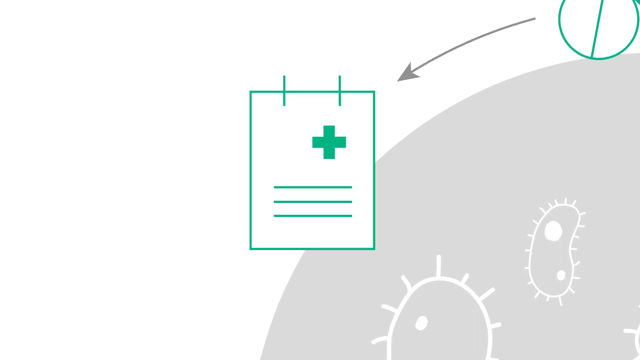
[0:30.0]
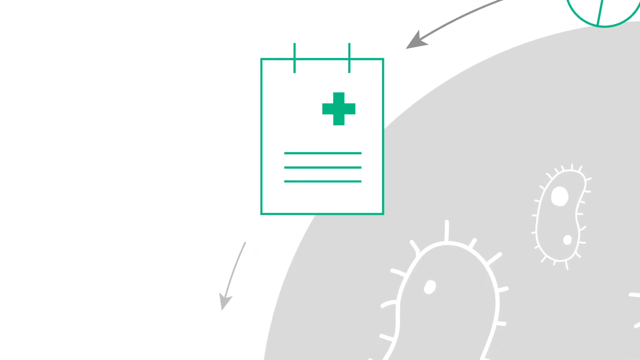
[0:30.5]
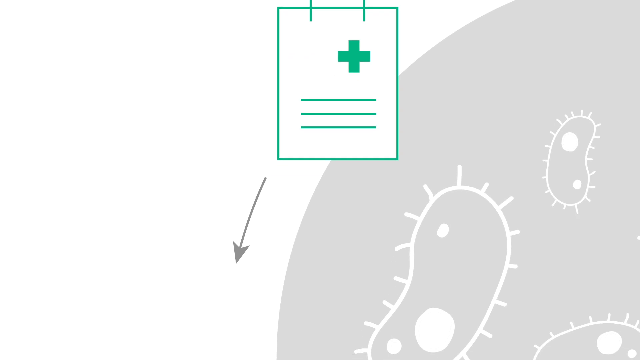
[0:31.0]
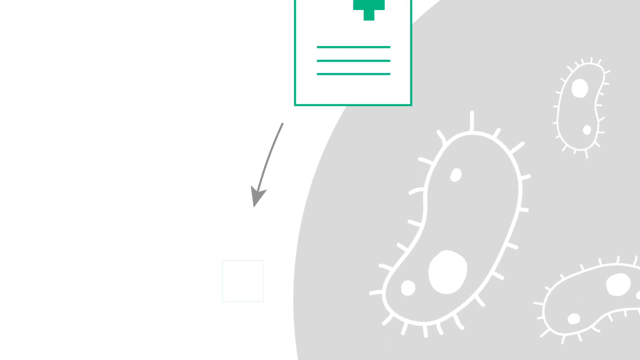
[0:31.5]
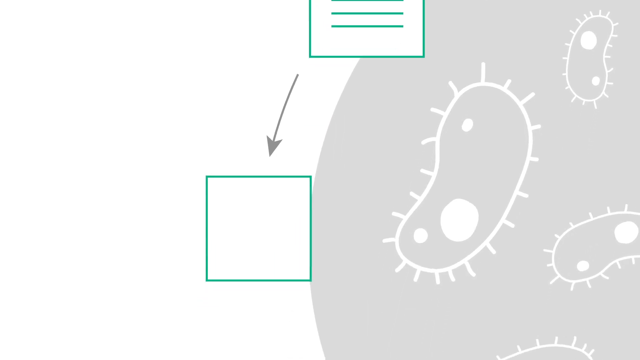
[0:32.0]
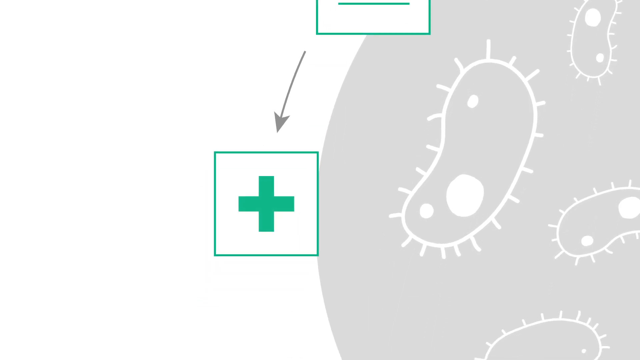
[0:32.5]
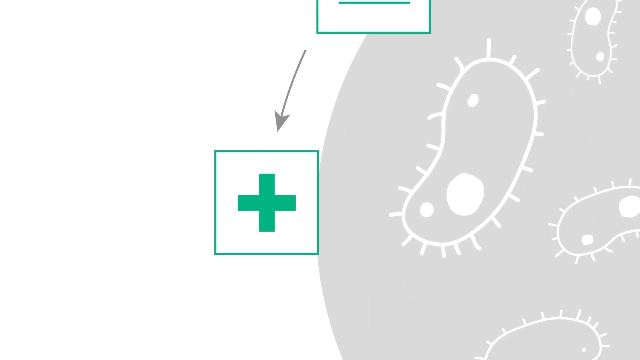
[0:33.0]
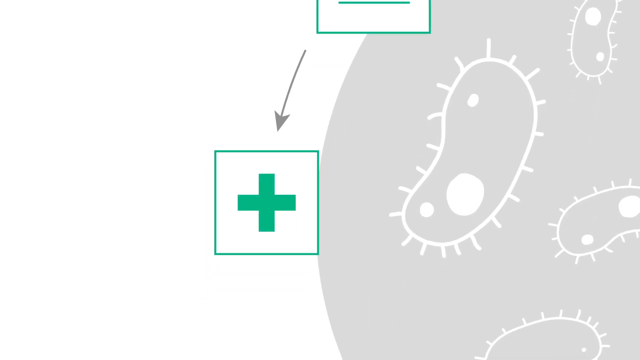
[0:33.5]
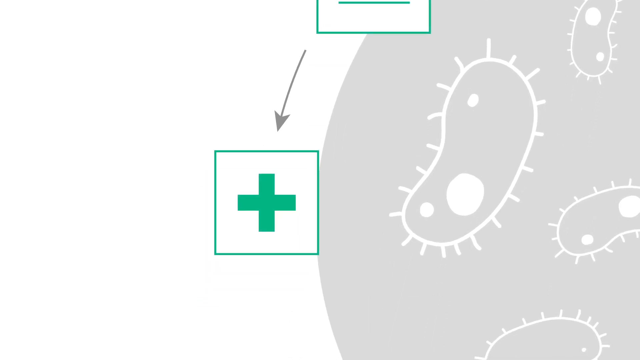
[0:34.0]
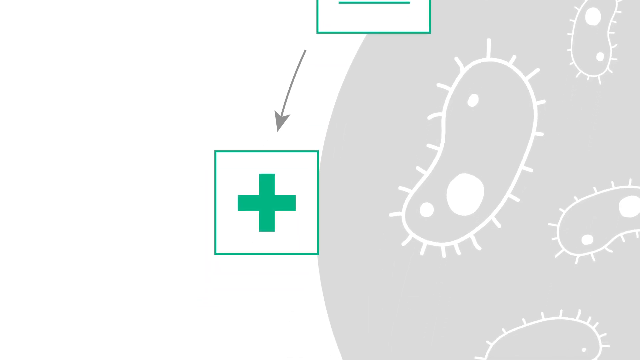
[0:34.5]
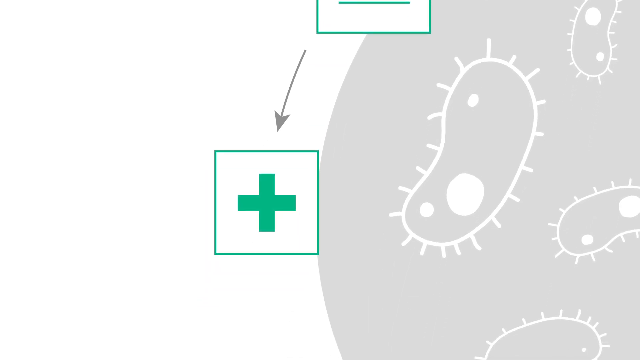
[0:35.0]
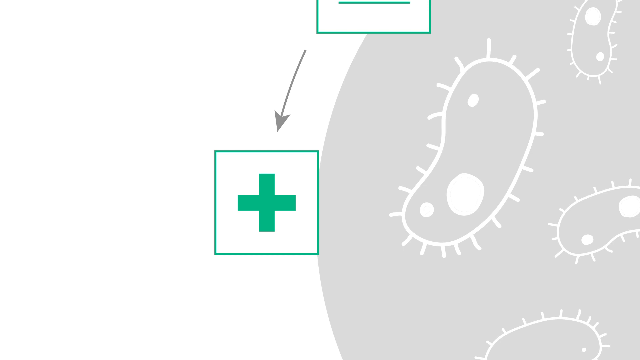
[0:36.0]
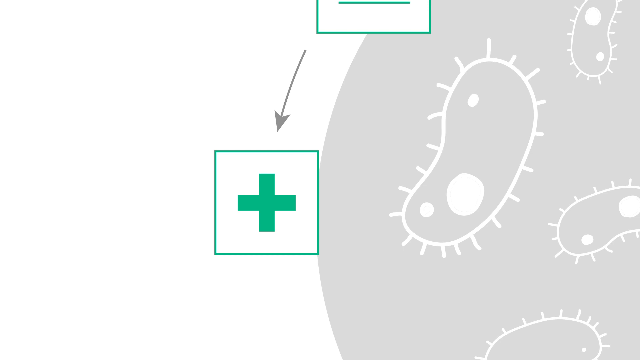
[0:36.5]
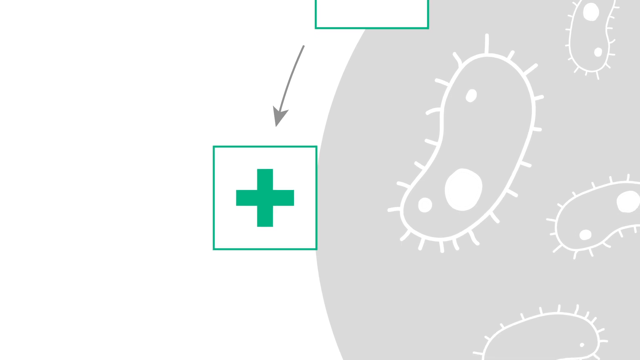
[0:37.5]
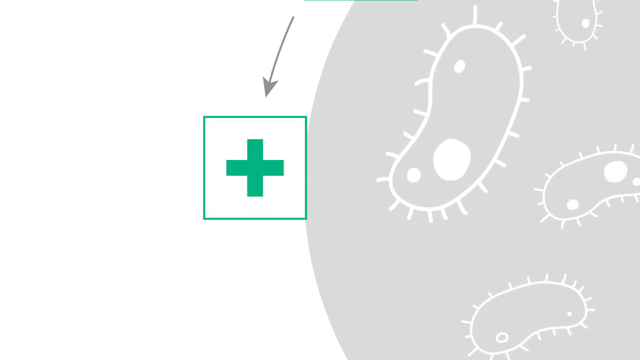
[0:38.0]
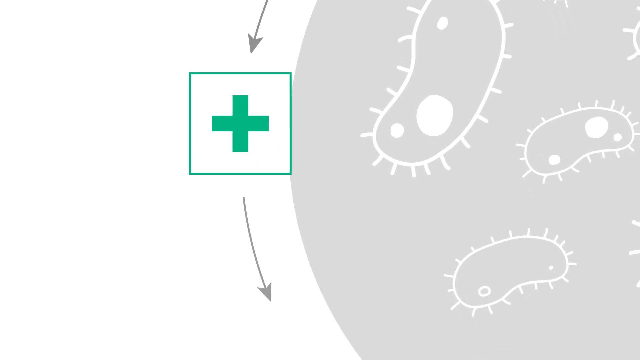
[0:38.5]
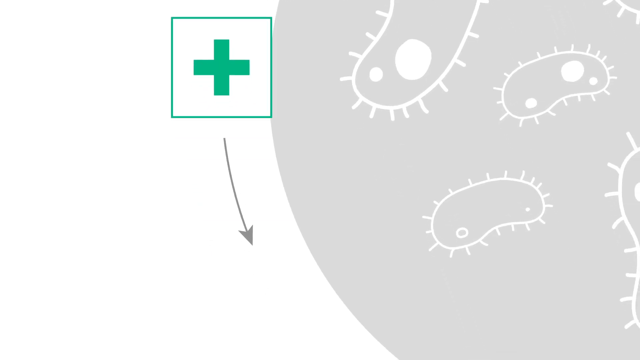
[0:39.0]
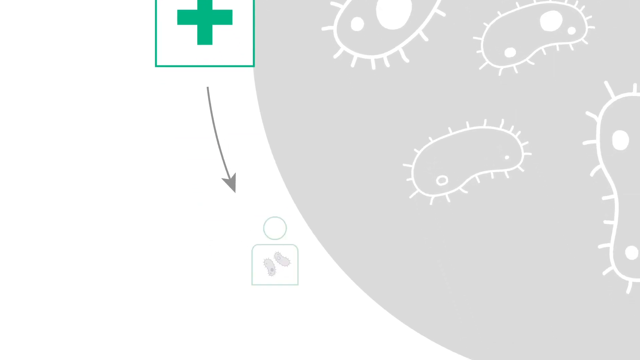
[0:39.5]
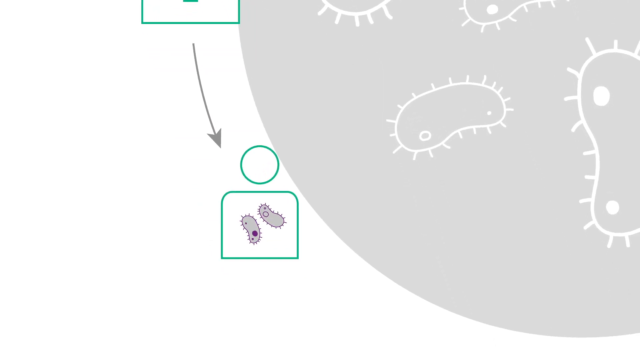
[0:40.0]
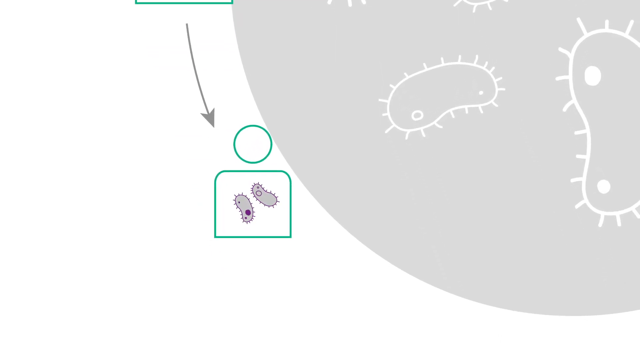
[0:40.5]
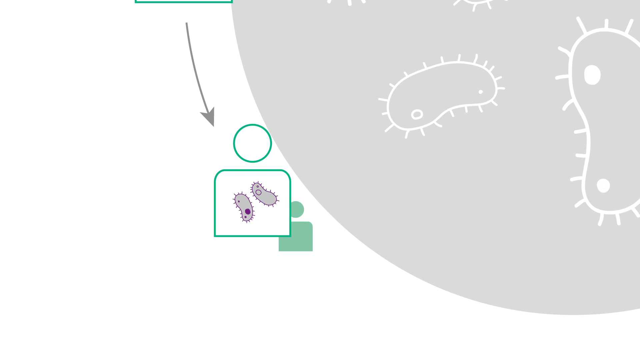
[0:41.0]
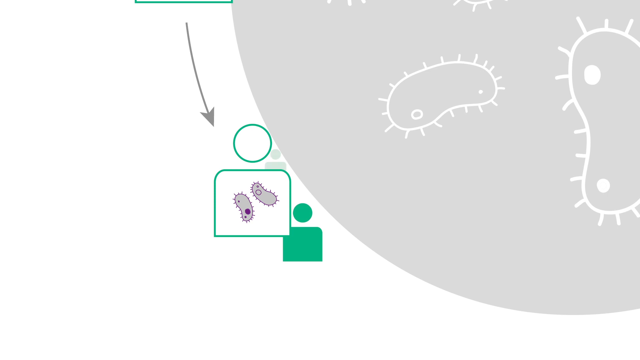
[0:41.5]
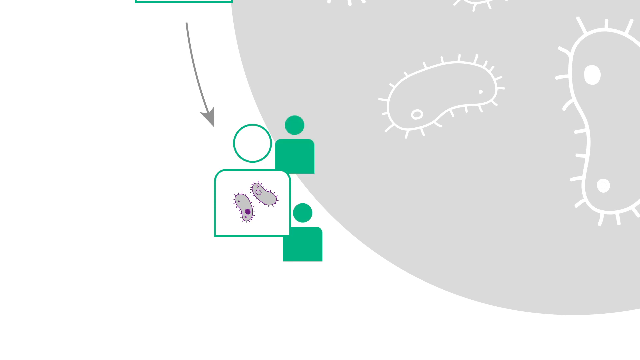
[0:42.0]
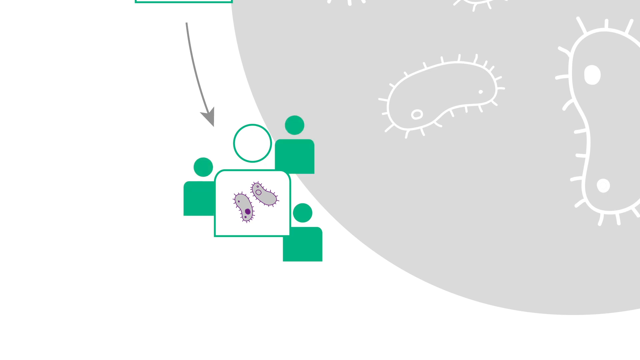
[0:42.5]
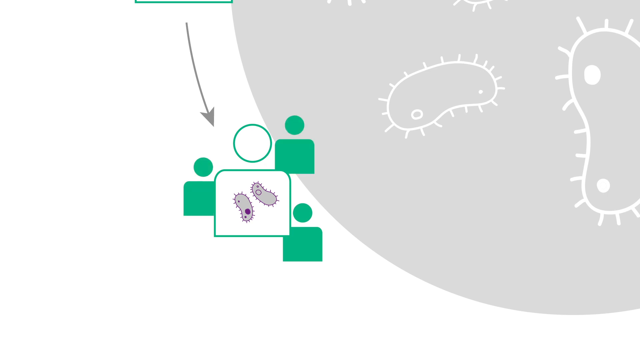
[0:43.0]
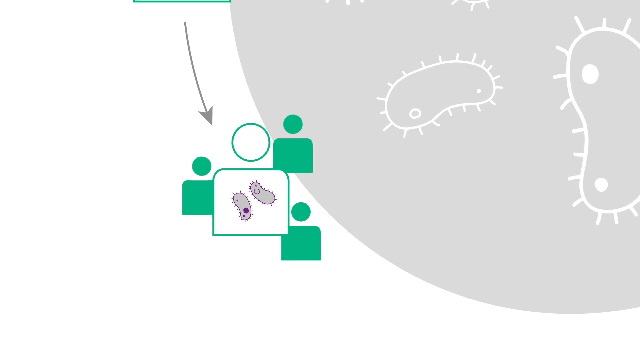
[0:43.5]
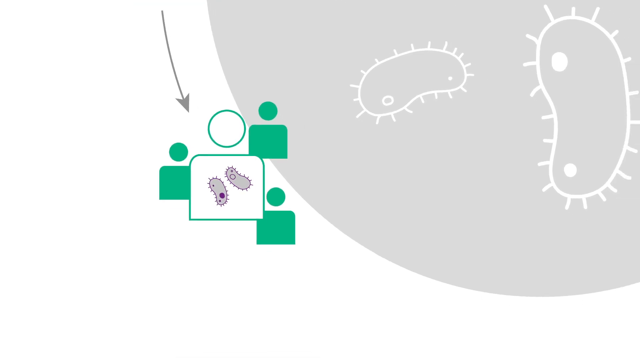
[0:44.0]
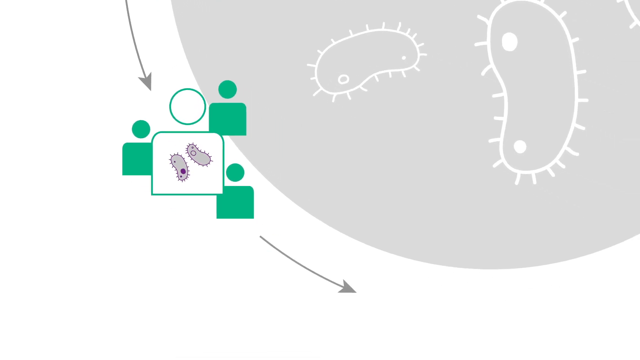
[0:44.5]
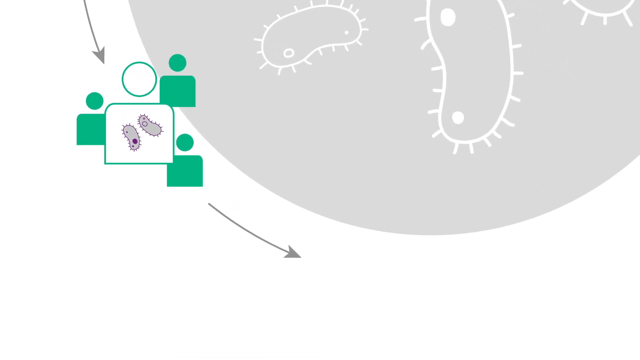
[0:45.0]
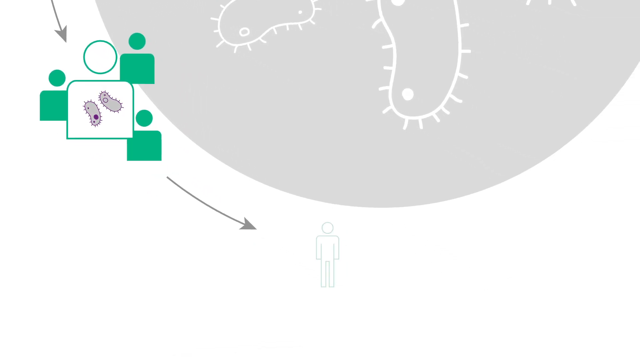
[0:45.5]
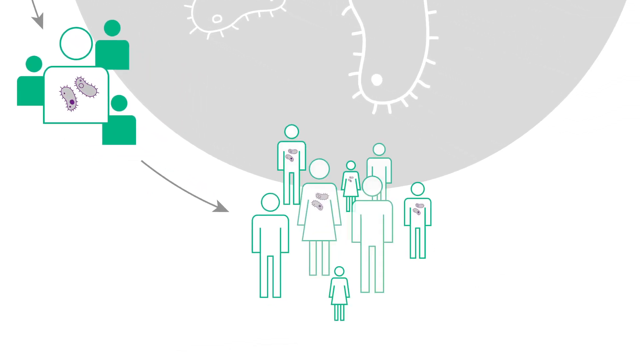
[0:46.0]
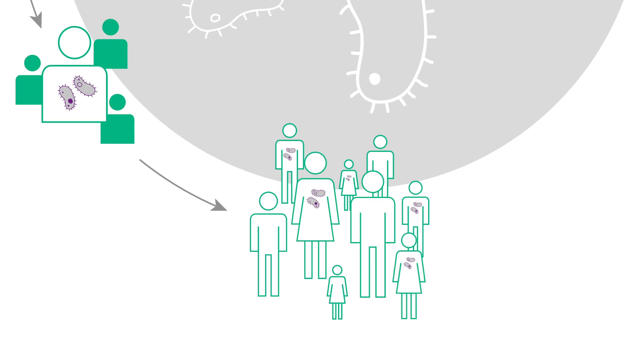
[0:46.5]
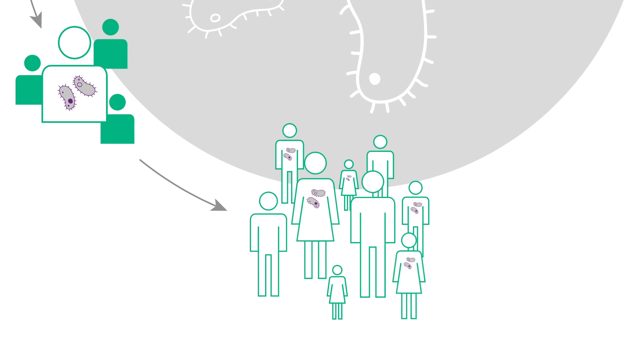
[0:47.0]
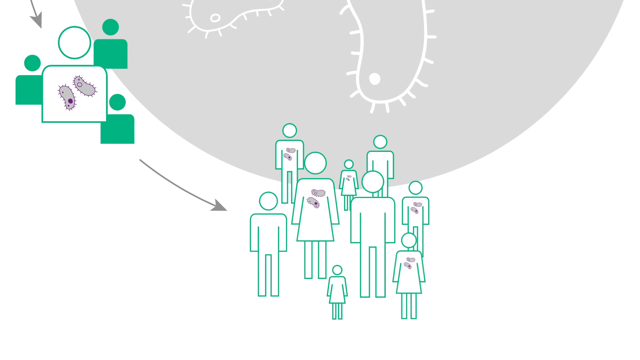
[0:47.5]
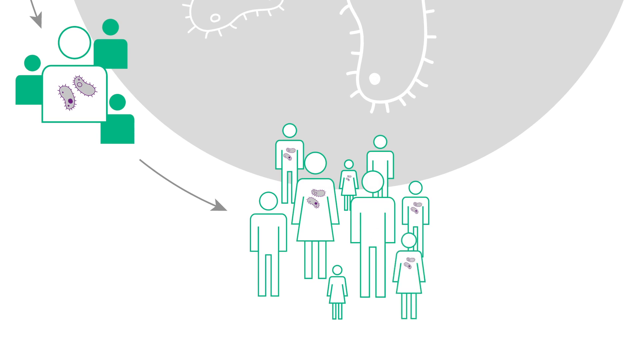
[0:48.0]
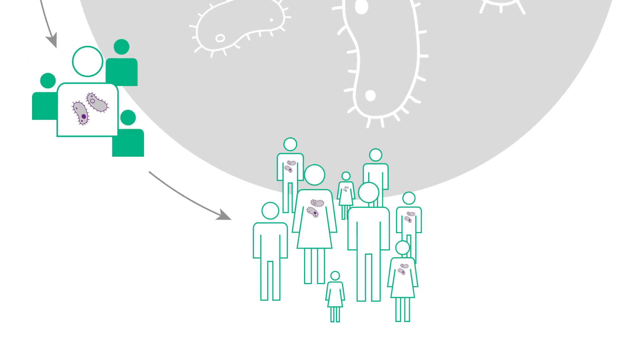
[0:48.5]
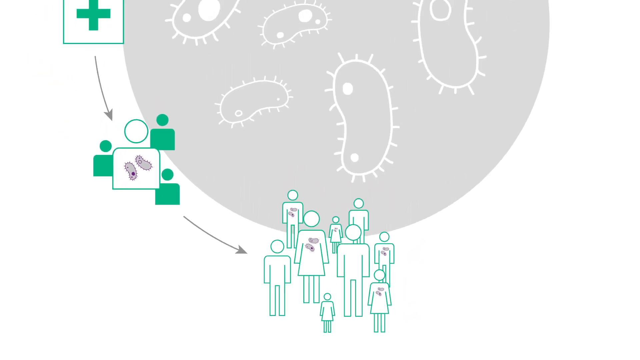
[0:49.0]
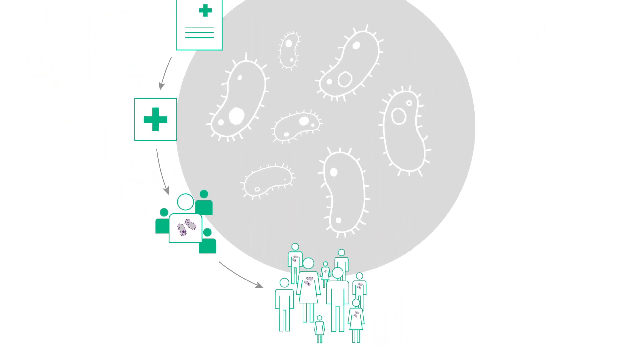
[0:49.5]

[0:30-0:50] There seem to be plus and minus signs, and what seem to be germs. Many germs appear, of an unidentified kind. Several human bodies are shown, all covered with many germs.